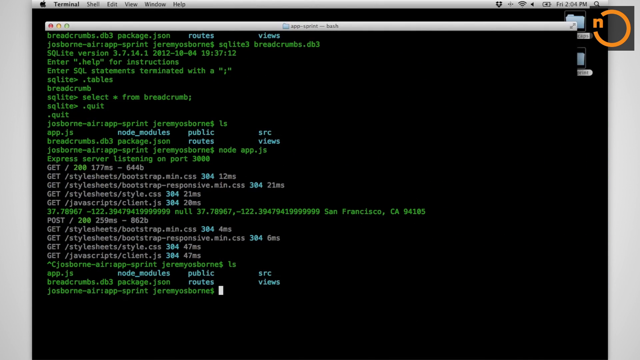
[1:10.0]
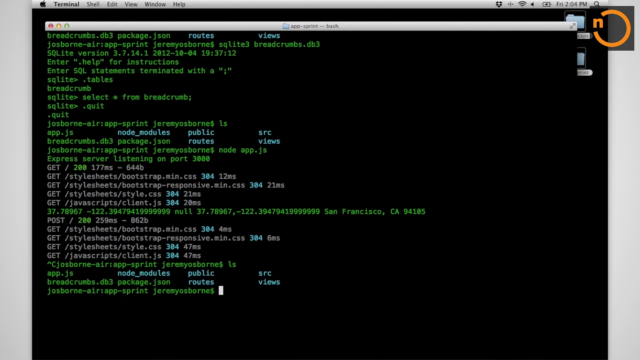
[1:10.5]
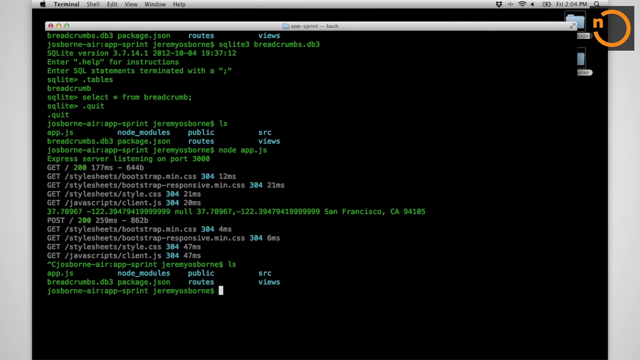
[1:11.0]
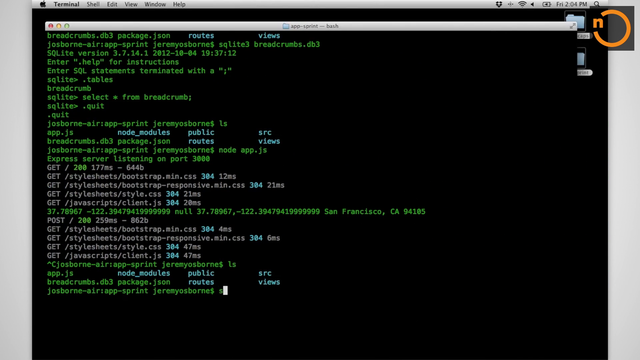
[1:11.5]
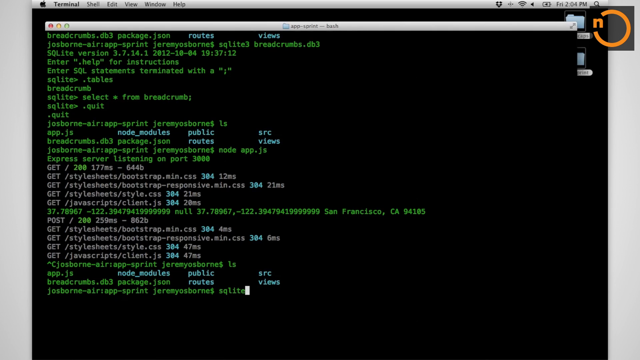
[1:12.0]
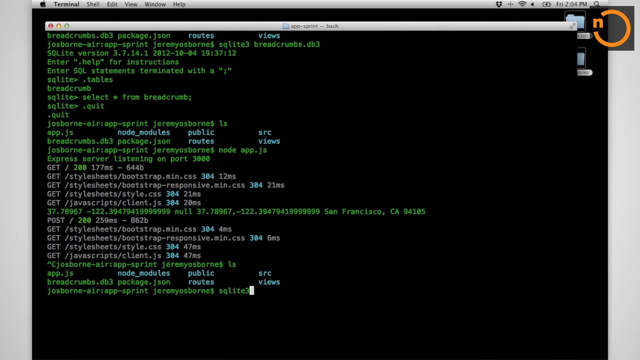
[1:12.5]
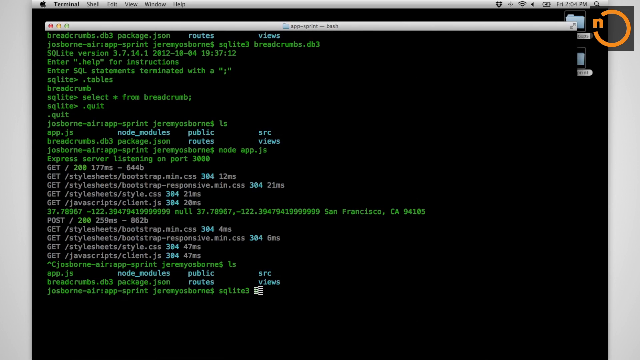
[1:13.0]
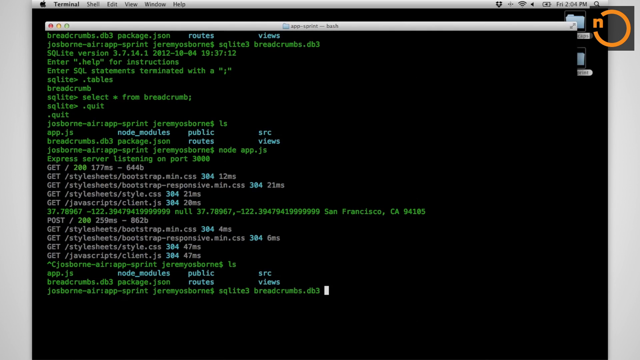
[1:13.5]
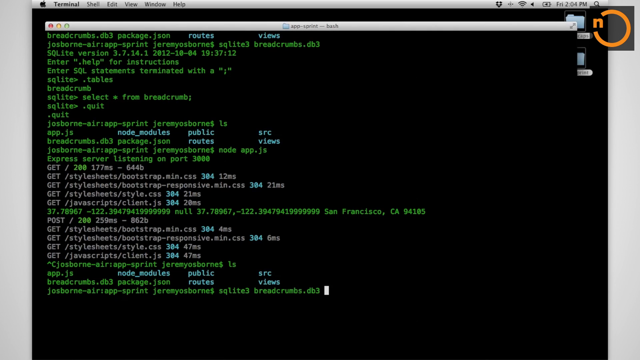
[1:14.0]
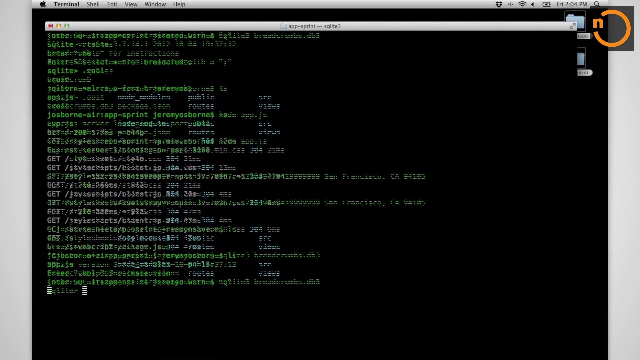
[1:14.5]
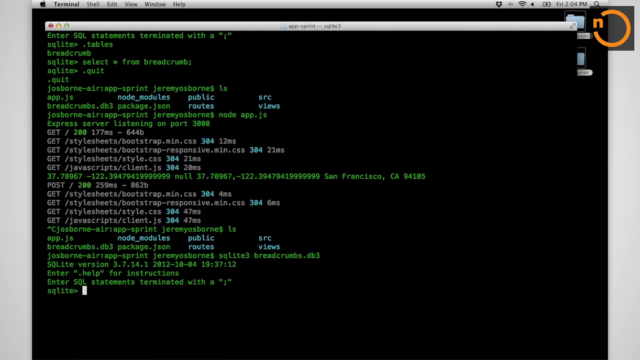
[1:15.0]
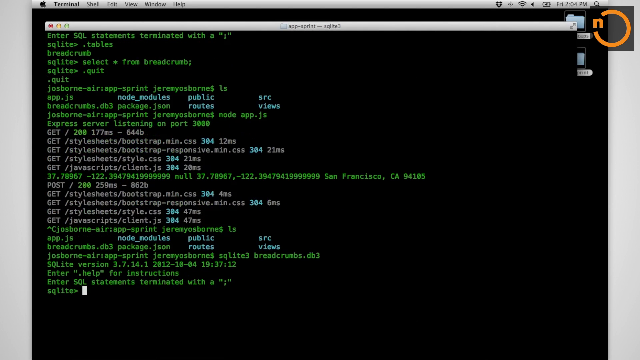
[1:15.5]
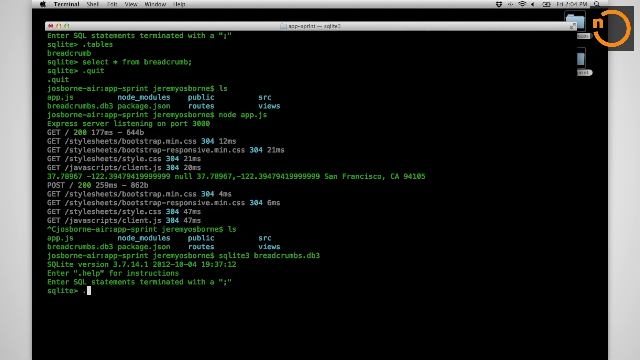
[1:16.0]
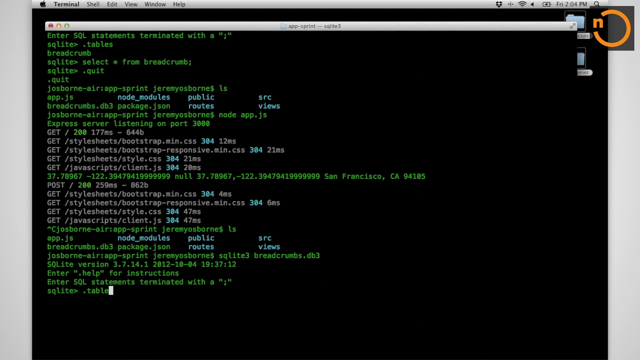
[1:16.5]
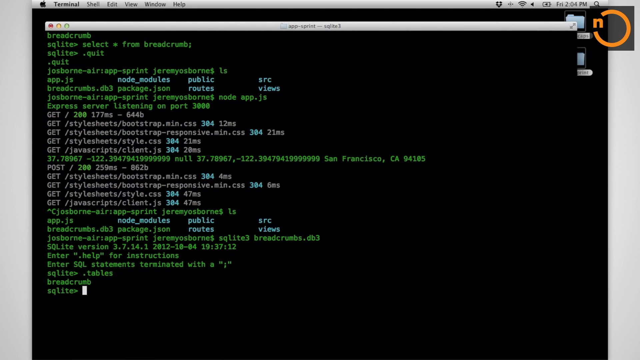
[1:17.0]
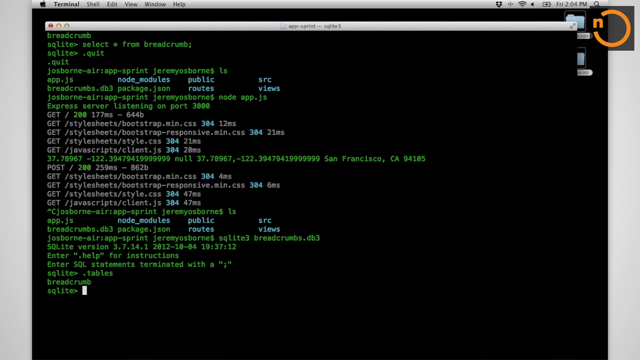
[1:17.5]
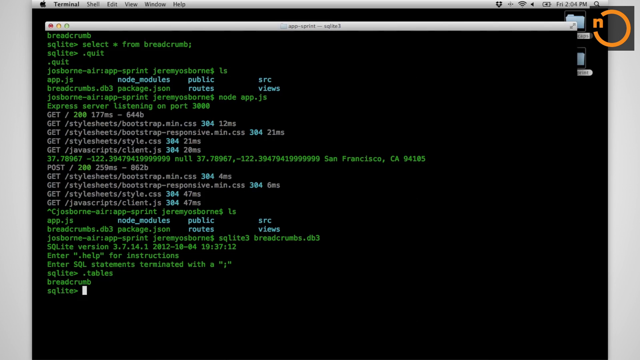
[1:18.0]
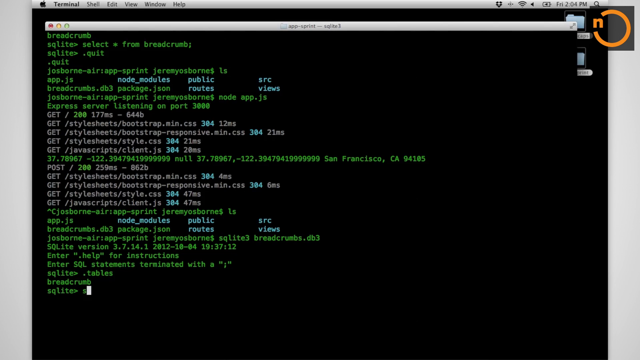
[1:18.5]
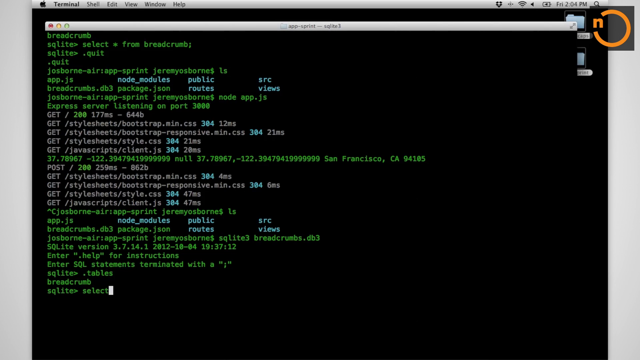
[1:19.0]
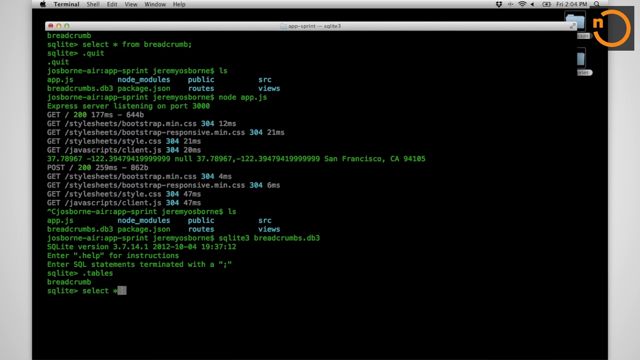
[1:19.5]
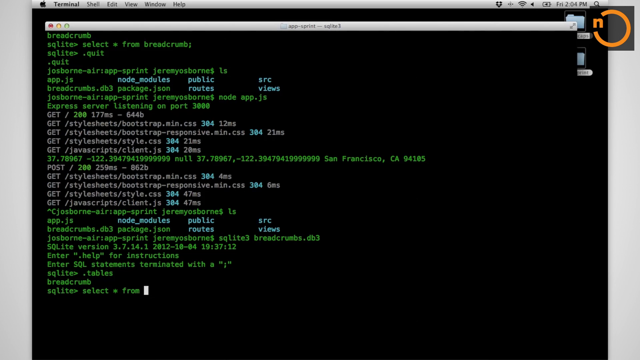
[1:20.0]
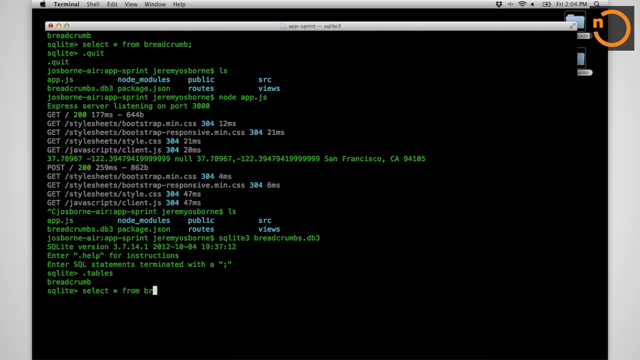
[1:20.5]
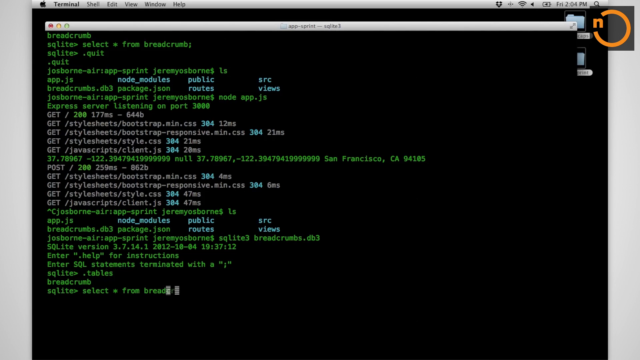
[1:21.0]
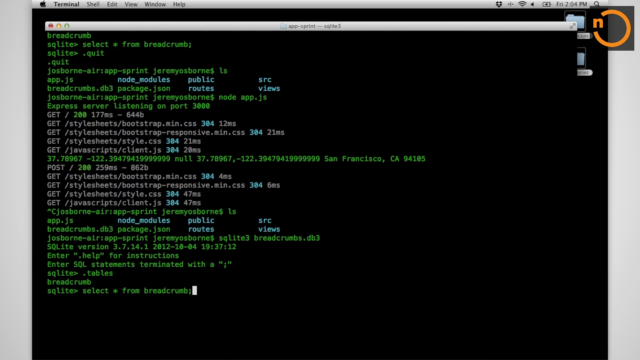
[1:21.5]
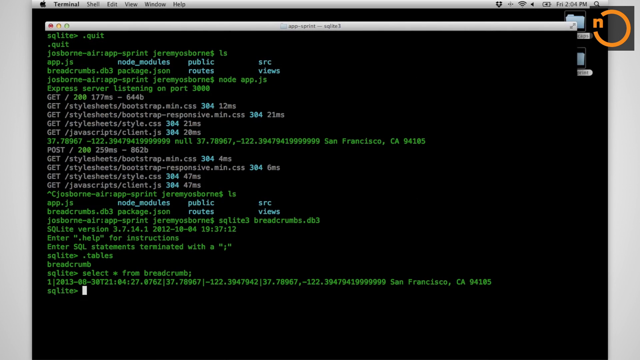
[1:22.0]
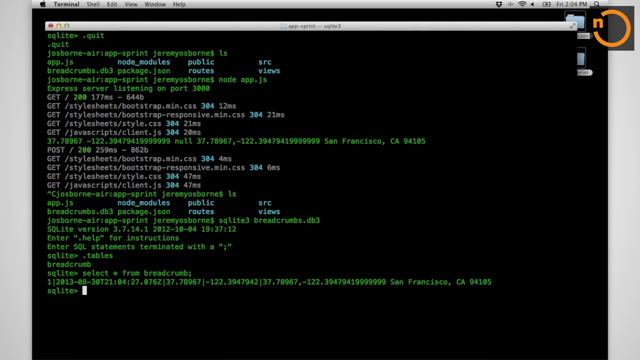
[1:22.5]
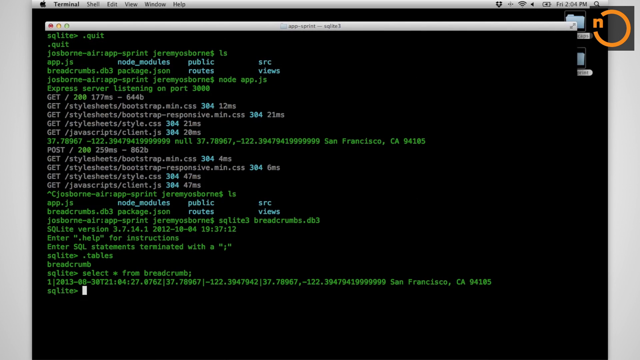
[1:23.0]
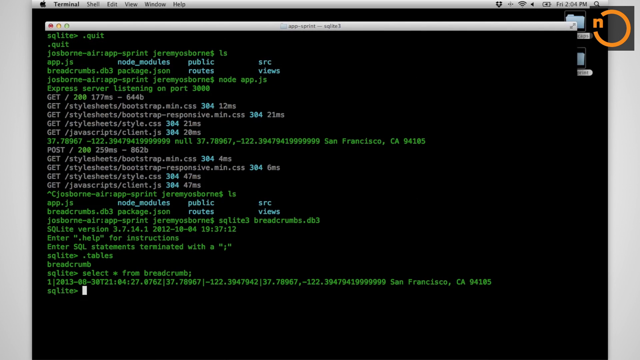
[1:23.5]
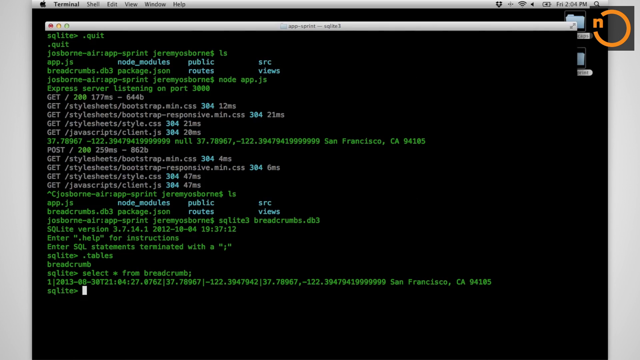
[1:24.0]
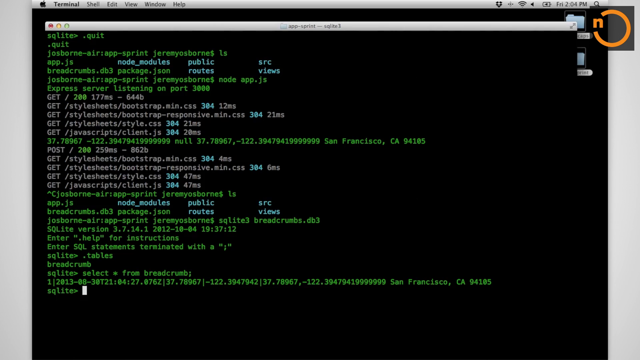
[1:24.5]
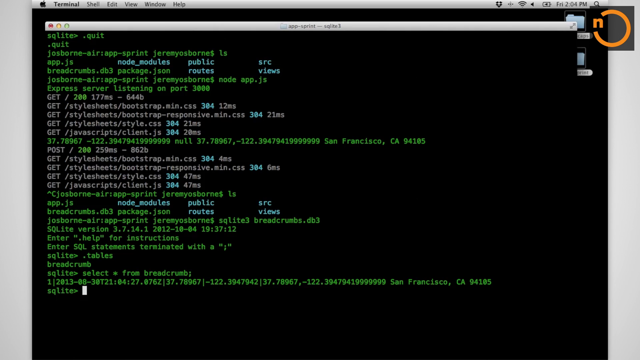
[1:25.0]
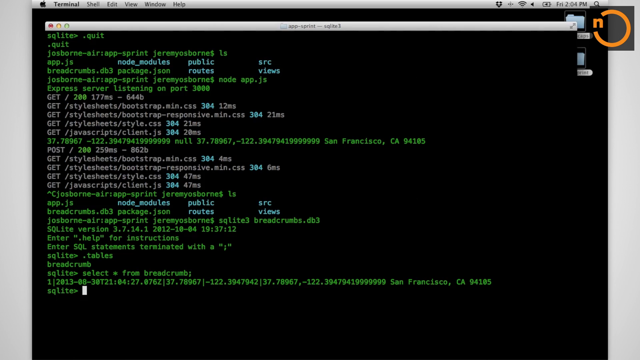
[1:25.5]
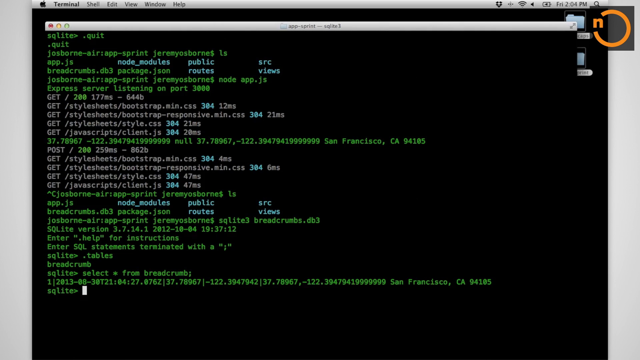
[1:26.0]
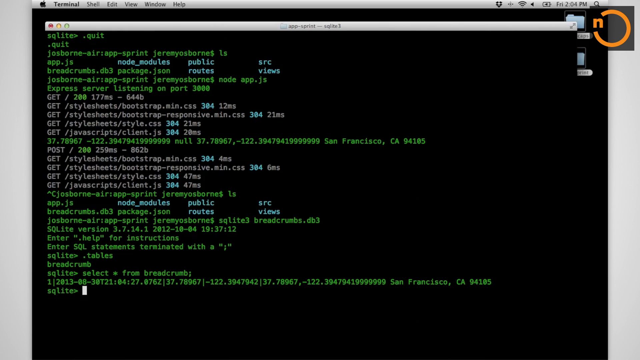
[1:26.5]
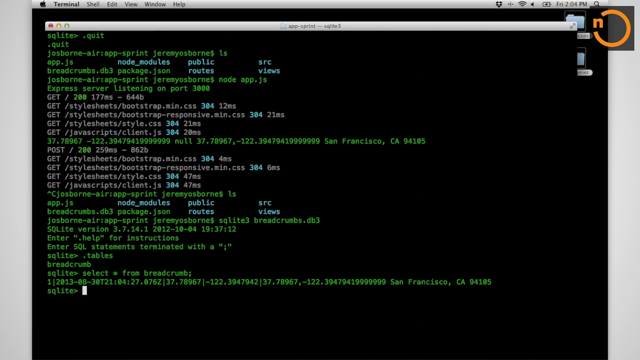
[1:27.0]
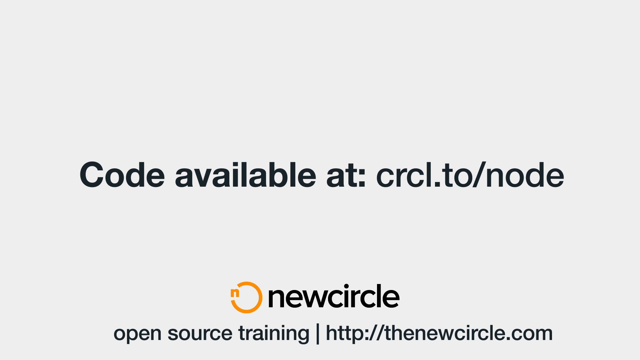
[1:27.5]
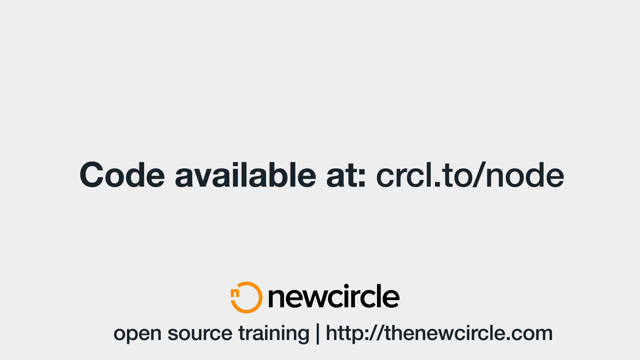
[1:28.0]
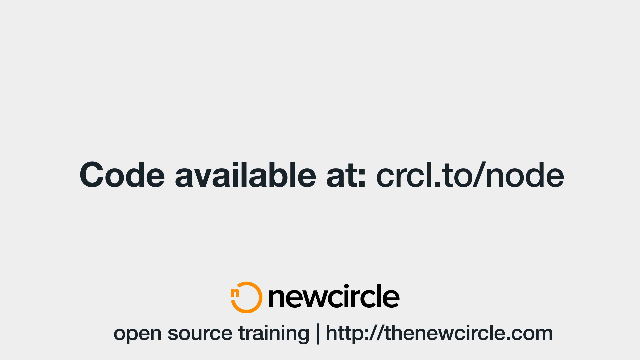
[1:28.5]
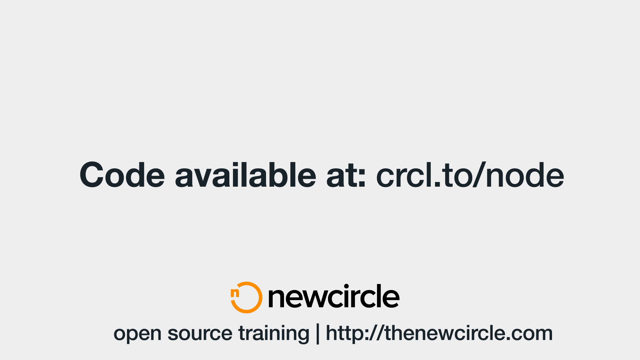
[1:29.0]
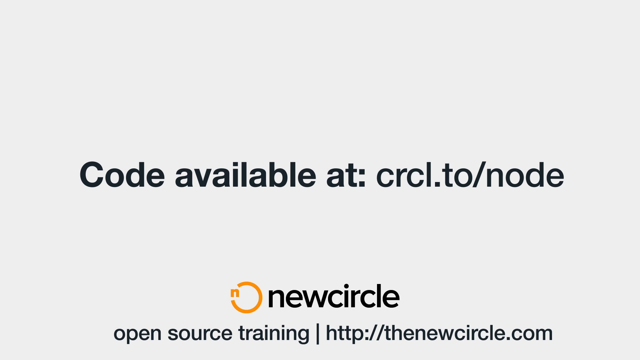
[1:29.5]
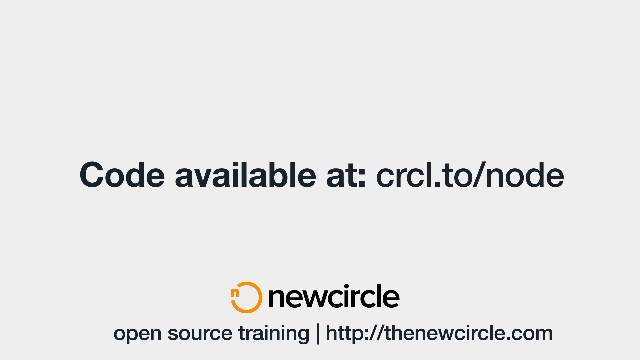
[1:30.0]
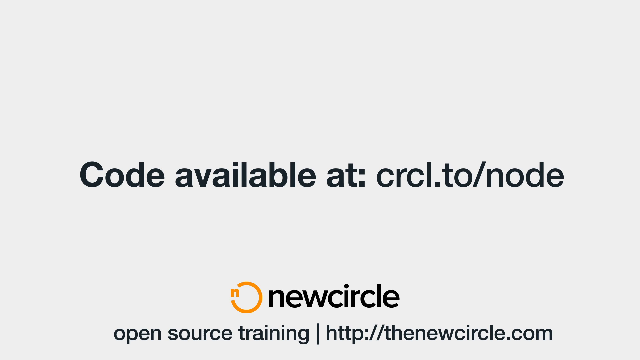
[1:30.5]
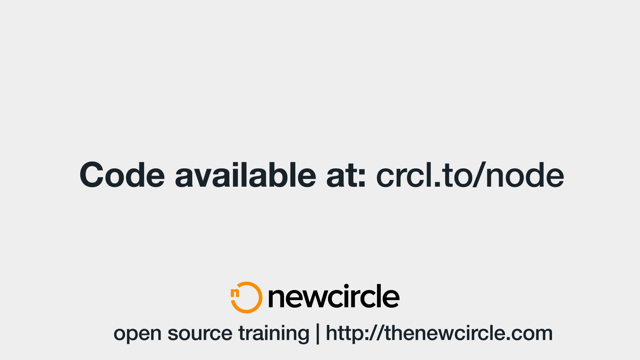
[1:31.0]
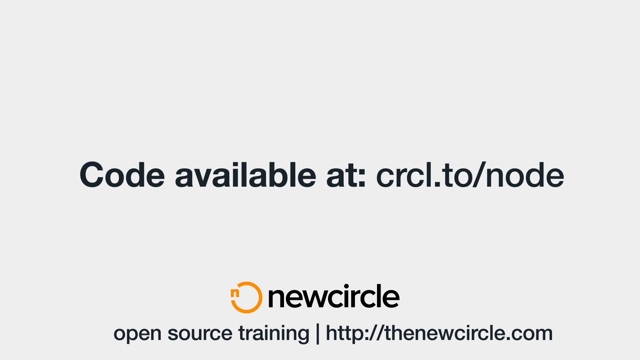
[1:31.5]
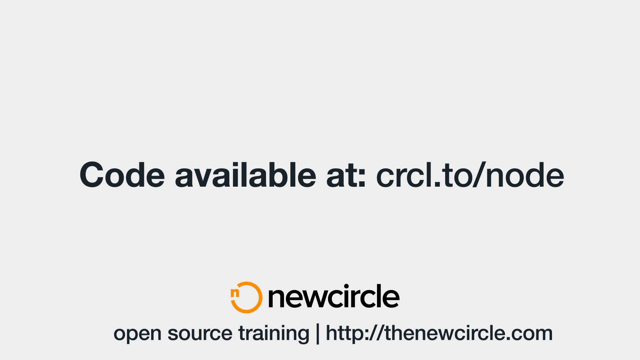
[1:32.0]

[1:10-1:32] The developer keeps typing and building the code, pressing enter as each line goes down and more information appears. What appears to be the location of the city of San Francisco appears: a number with a latitude and longitude, with San Francisco written on it. It may be something related to maps and location. The IP shows that it is from San Francisco, California, with its CEP 9405. At the end of the video, an ad appears saying the code is available at crcl.to, from a company called New Circle.